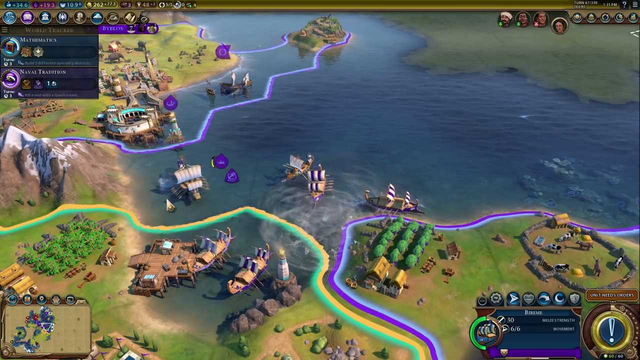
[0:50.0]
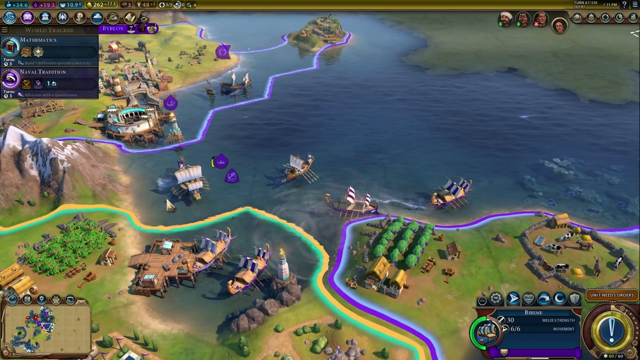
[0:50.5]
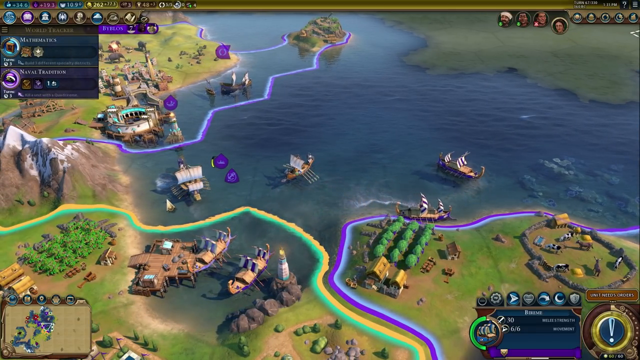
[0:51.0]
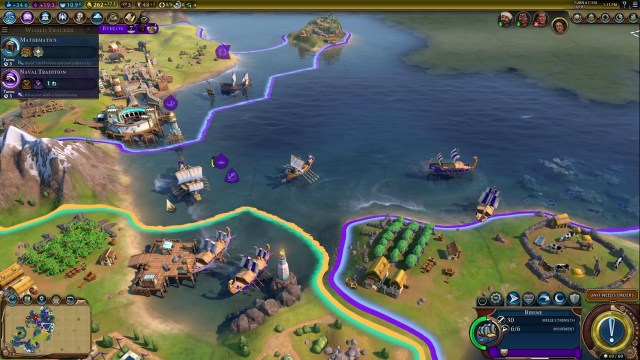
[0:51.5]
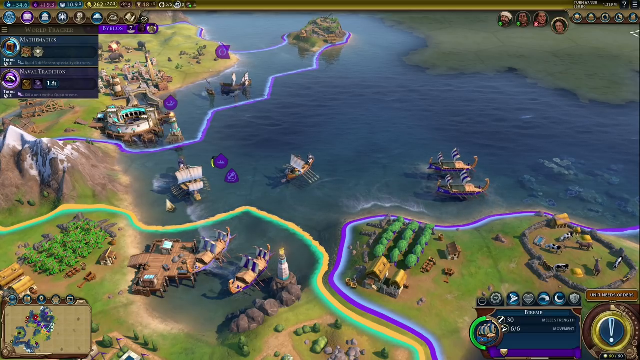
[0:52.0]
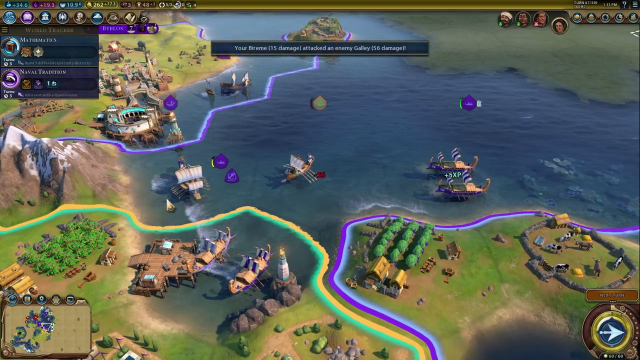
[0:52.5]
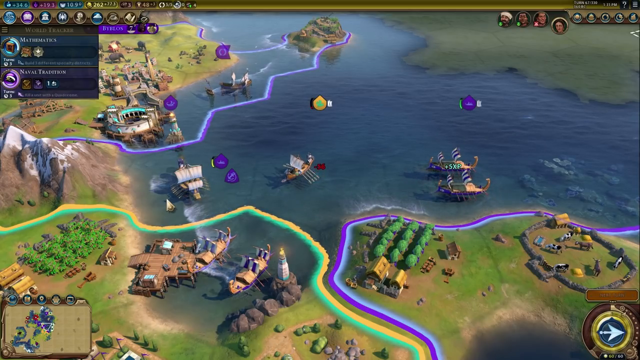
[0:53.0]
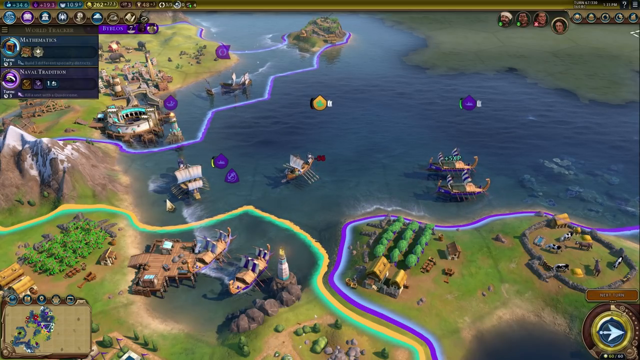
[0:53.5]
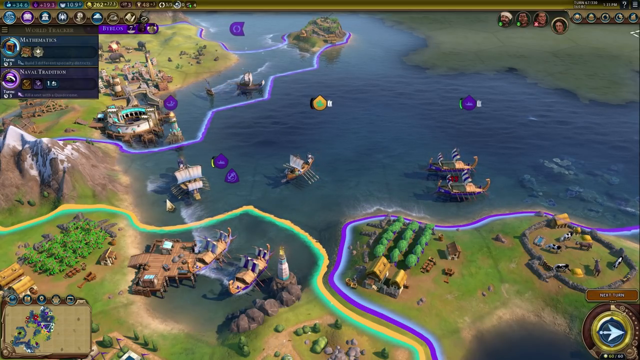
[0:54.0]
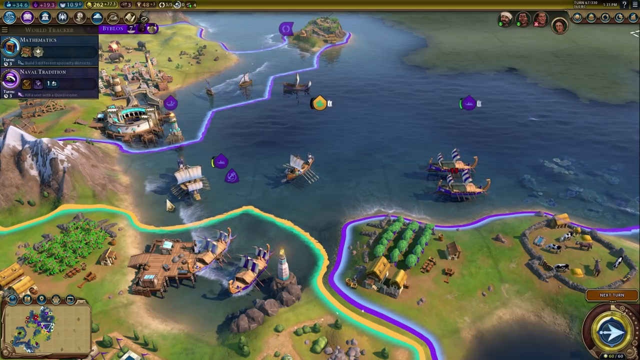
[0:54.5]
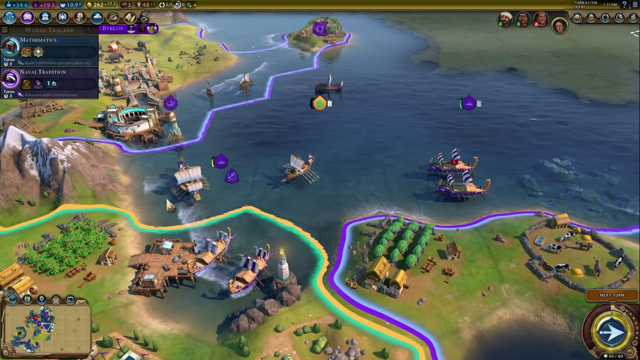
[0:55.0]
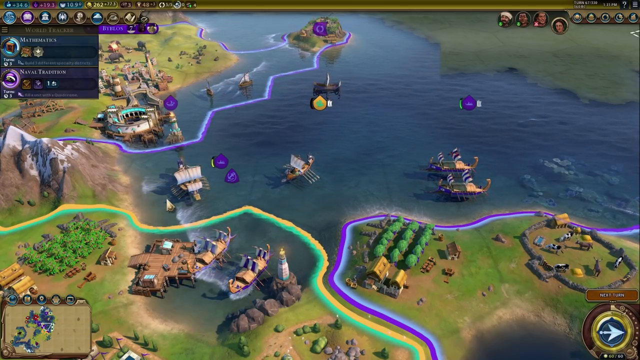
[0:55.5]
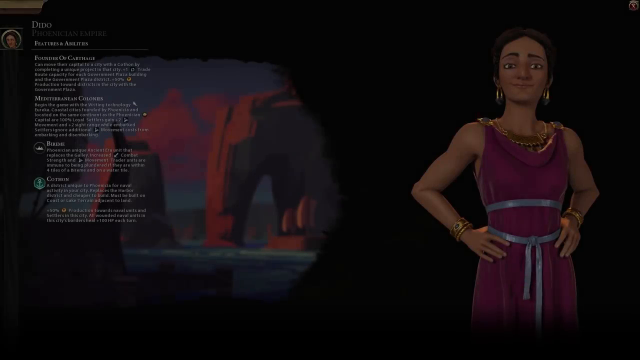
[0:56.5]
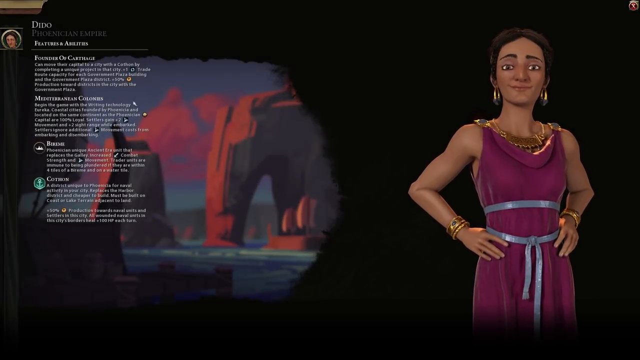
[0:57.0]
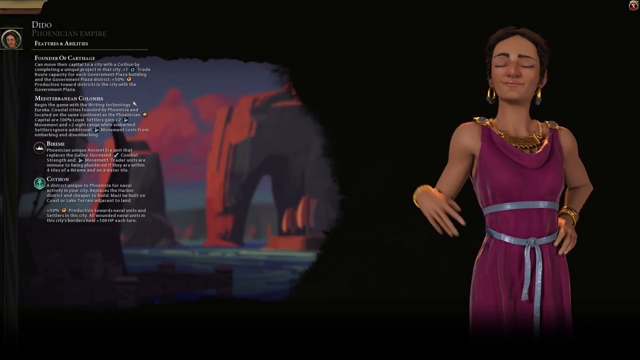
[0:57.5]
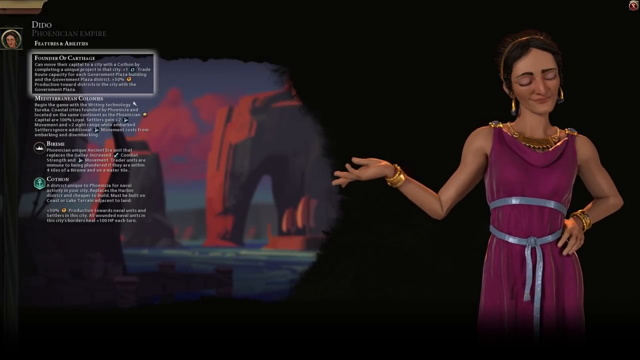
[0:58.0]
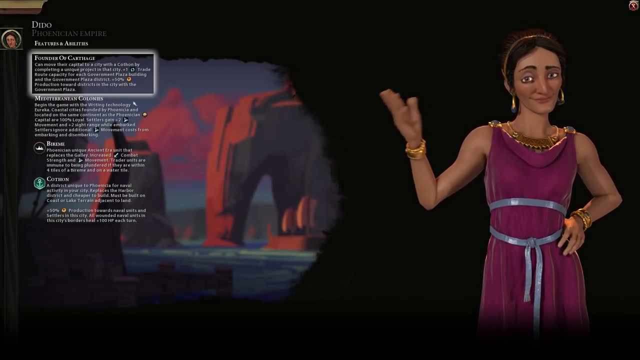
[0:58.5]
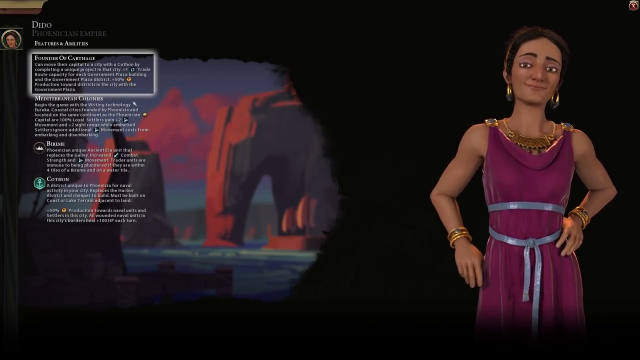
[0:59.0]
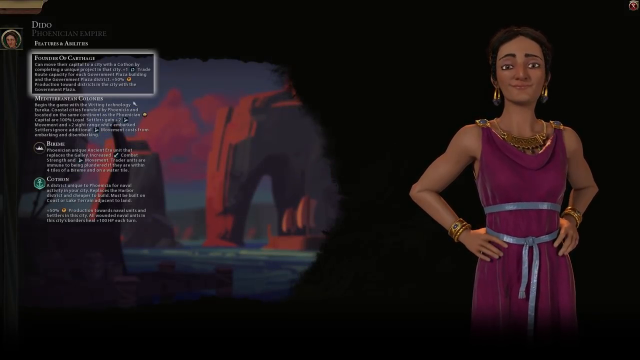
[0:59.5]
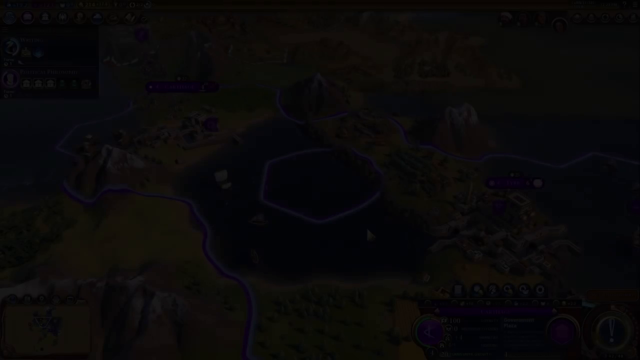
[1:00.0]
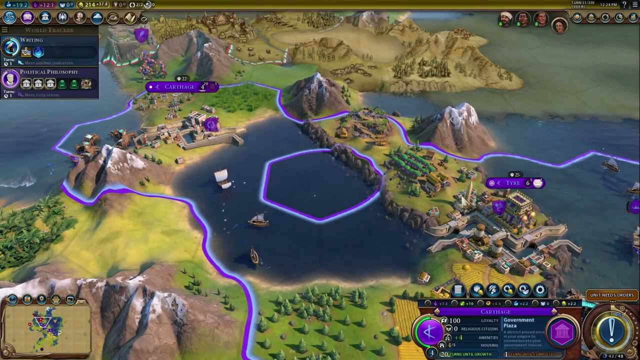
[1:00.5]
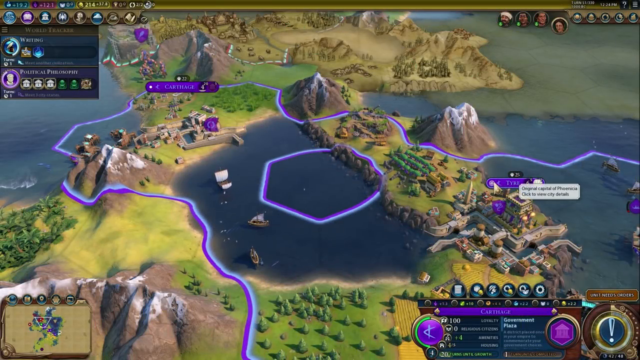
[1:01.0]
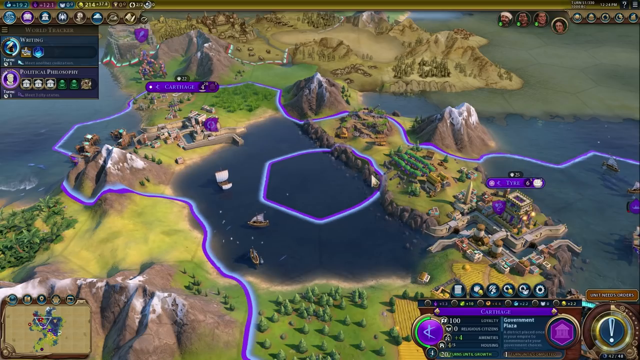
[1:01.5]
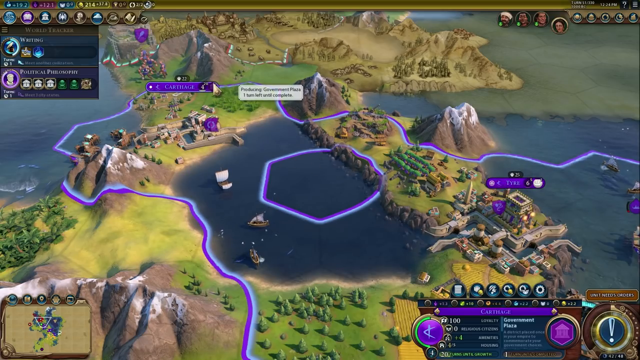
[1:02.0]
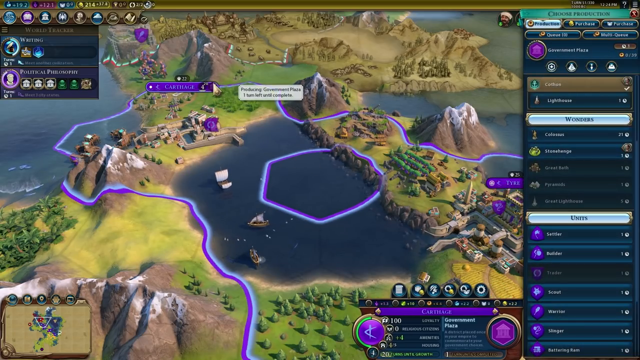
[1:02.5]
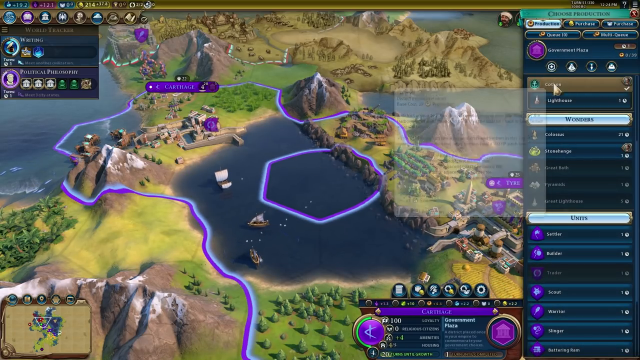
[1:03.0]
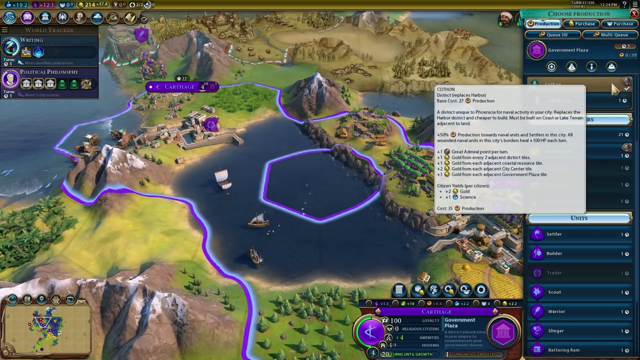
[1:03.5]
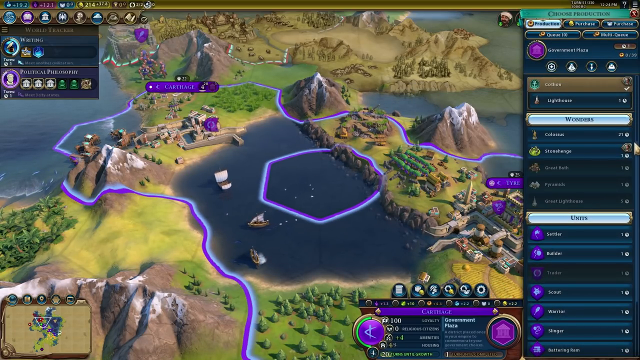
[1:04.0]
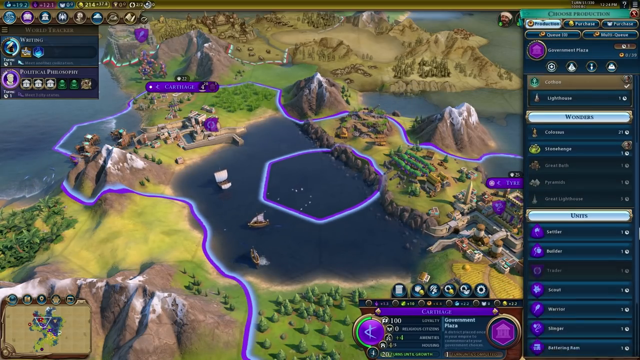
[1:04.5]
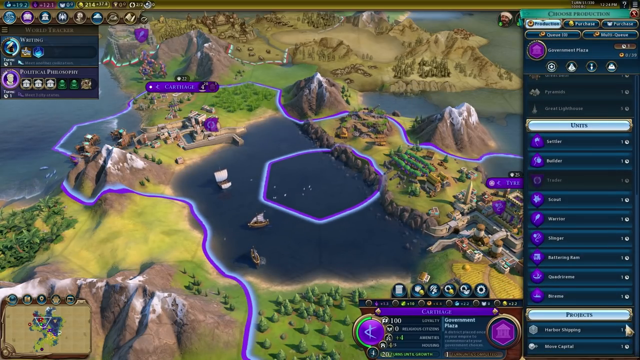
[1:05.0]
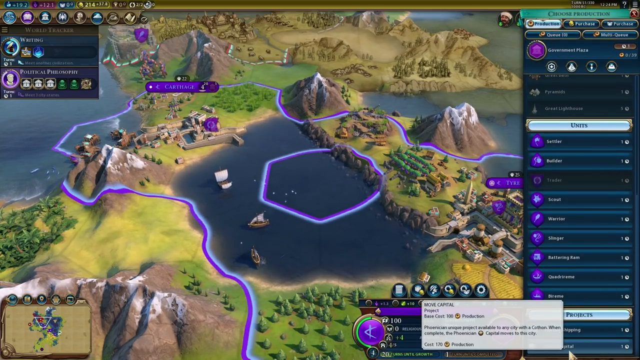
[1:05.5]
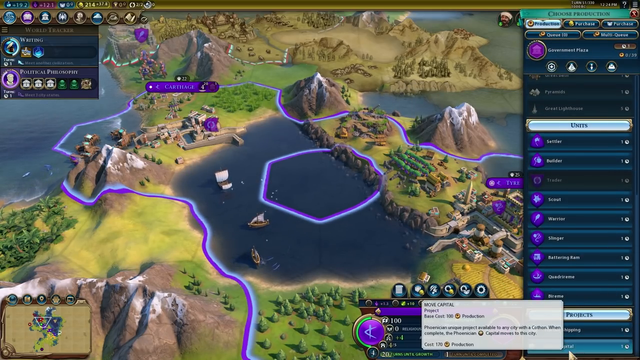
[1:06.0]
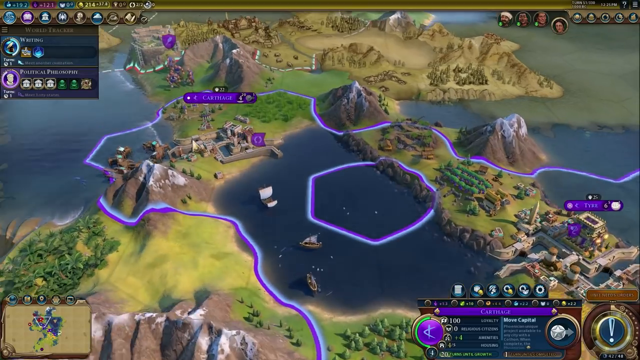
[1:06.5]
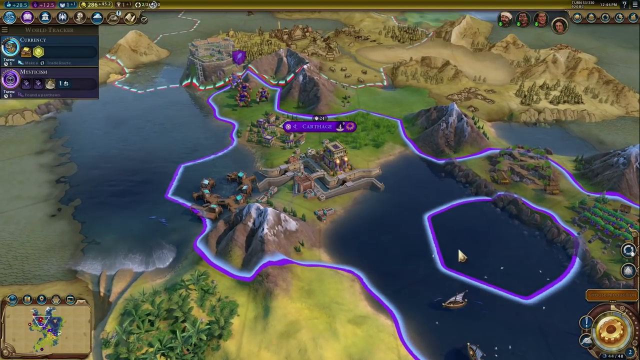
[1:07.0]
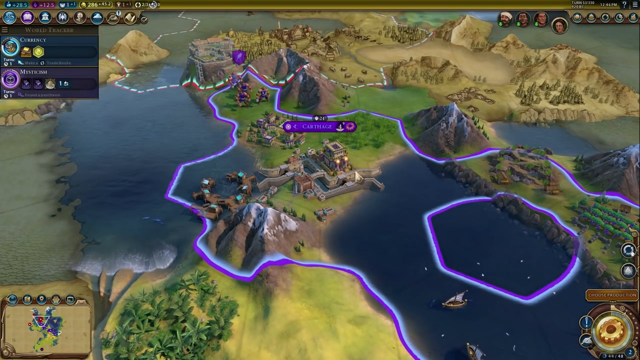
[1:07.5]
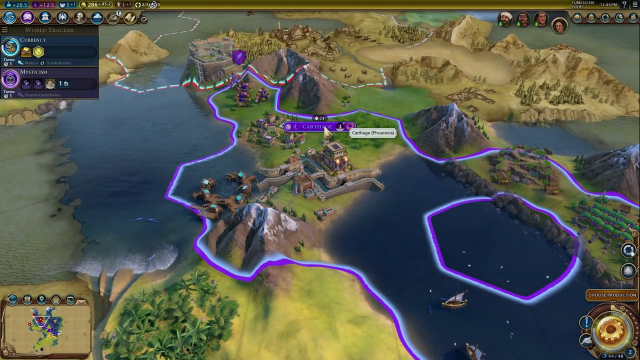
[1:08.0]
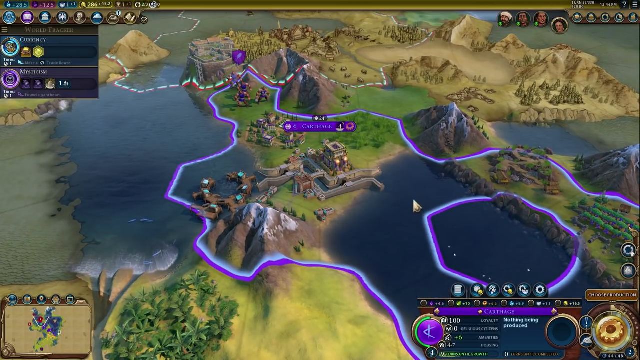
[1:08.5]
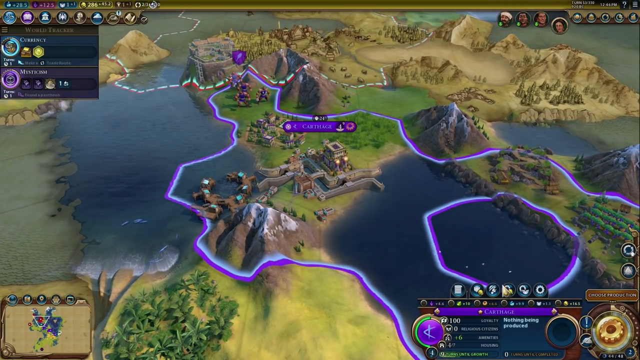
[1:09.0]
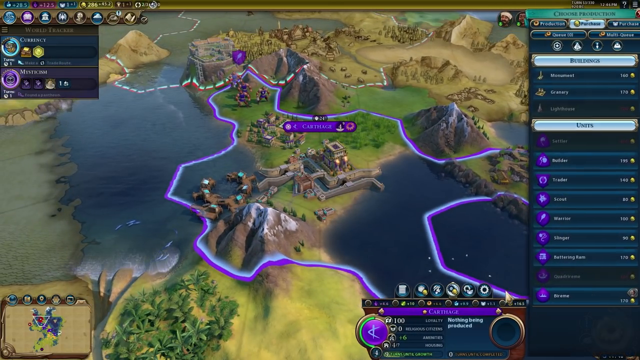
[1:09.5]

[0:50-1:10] Ships move around on the map, and it looks like possibly some sort of battle is going on at sea, with boats that appear to be opposing one another. The video cuts back to the woman in the purple toga with dark hair. She speaks, pointing at a long section of text next to her. Then it cuts back to the map, which shows a lot of different terrain: water areas, waterways with boats in them, sections of city with city walls, and a lot of undeveloped land with mountains, hills and trees. On the right side are what appear to be controls for the game, with many different options and clickable sections, apparently for playing the game or checking the status of the characters or development within the game.